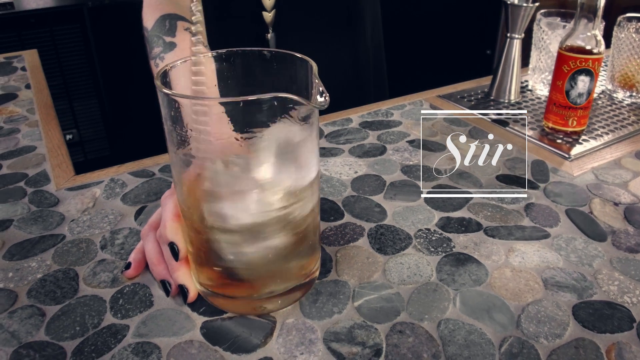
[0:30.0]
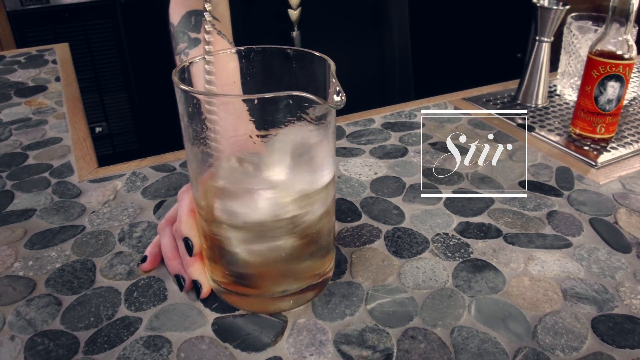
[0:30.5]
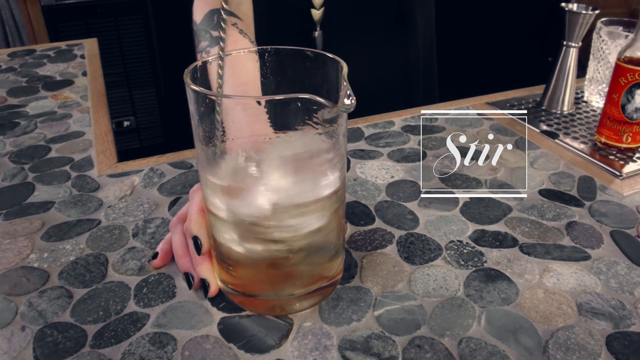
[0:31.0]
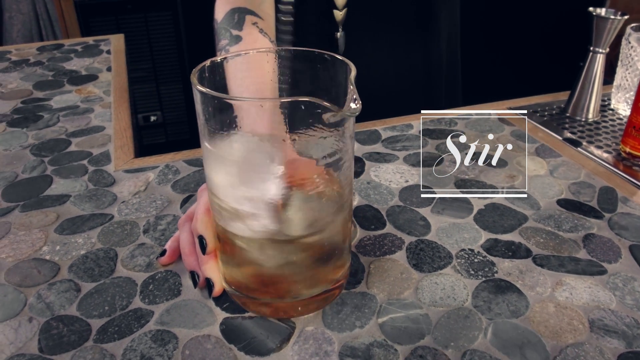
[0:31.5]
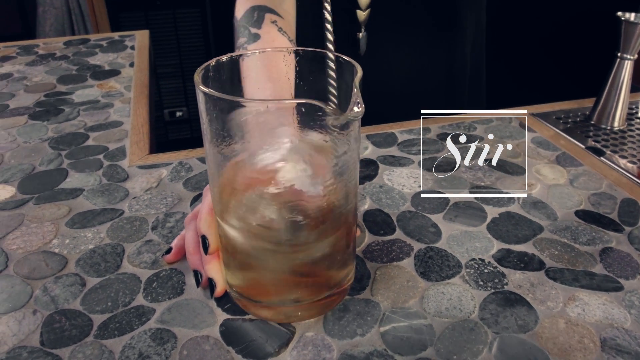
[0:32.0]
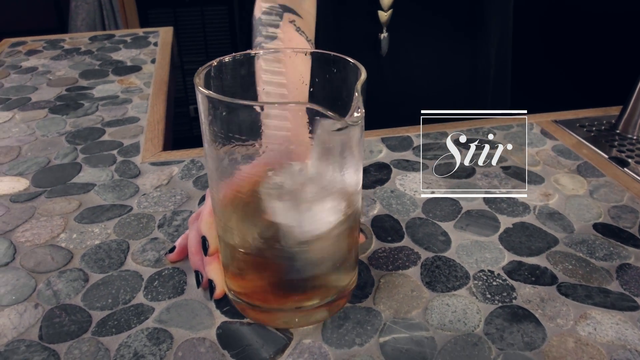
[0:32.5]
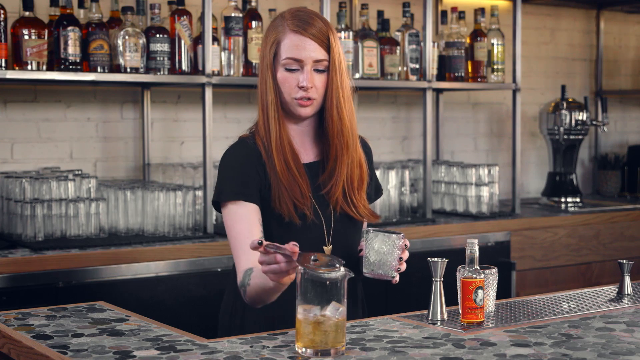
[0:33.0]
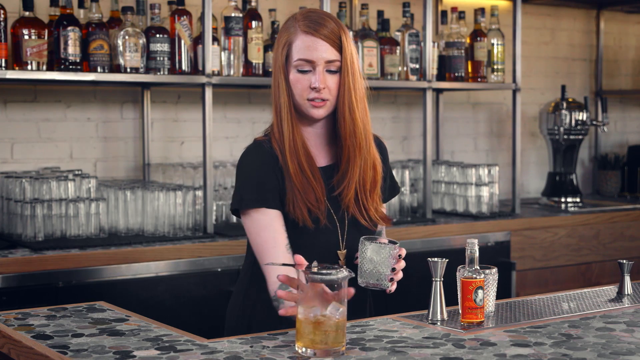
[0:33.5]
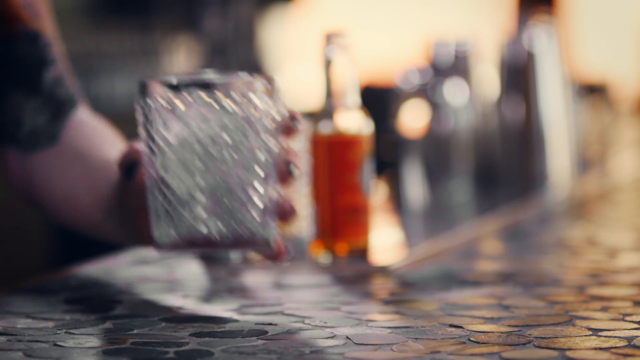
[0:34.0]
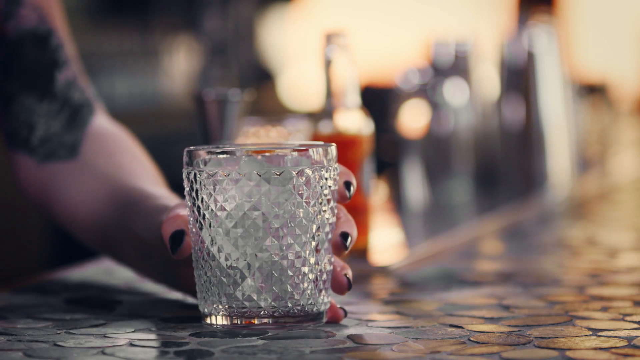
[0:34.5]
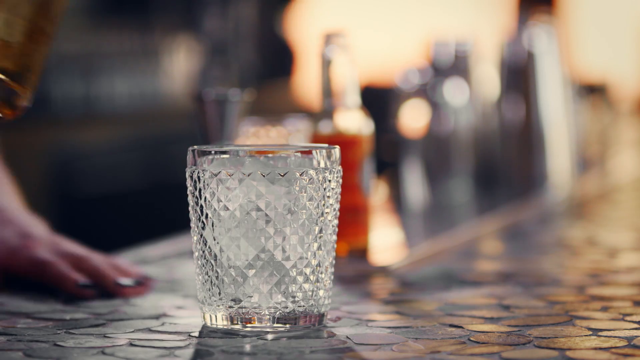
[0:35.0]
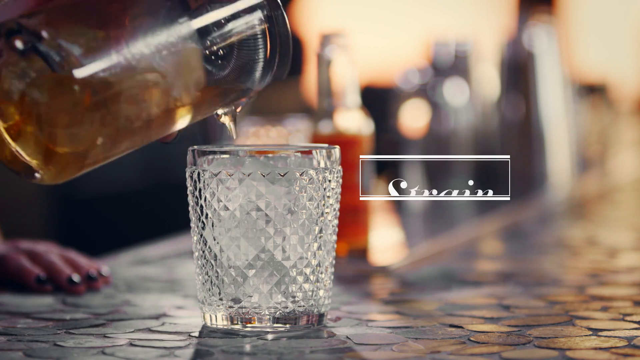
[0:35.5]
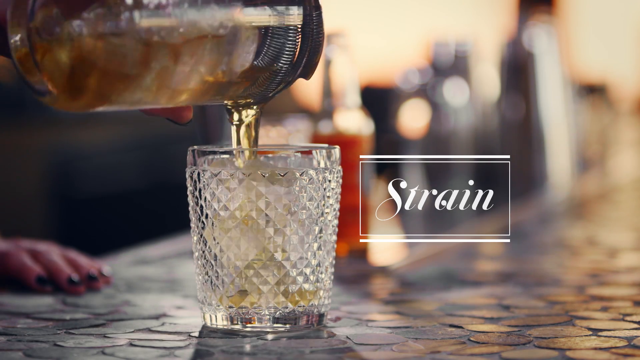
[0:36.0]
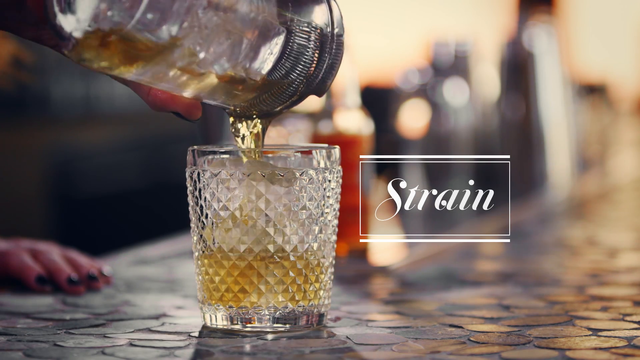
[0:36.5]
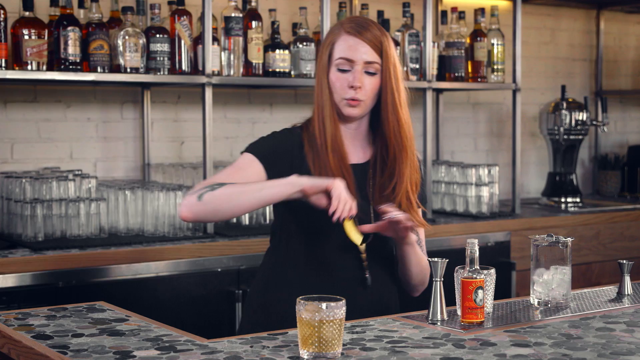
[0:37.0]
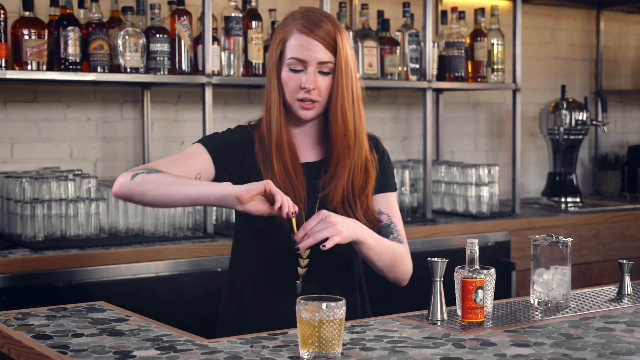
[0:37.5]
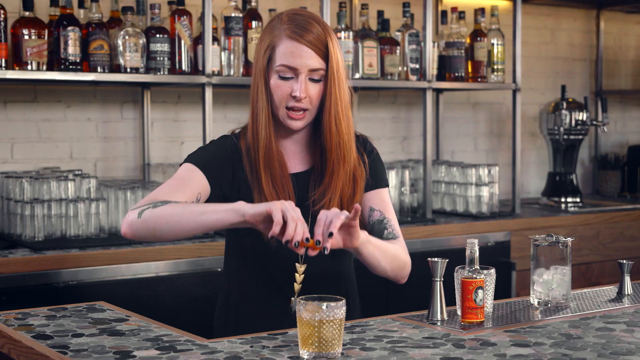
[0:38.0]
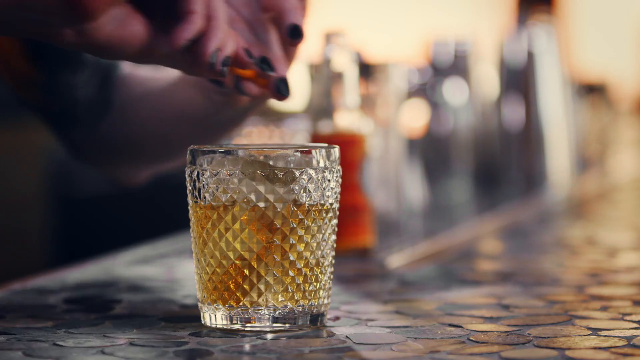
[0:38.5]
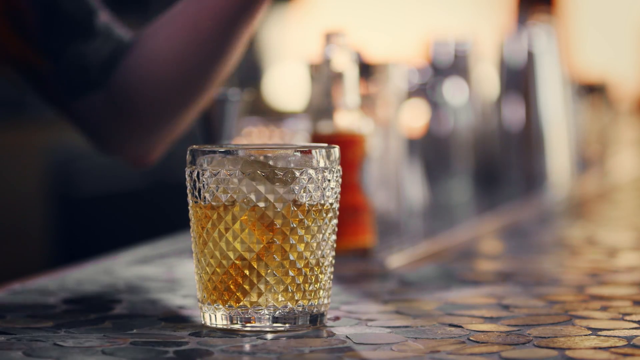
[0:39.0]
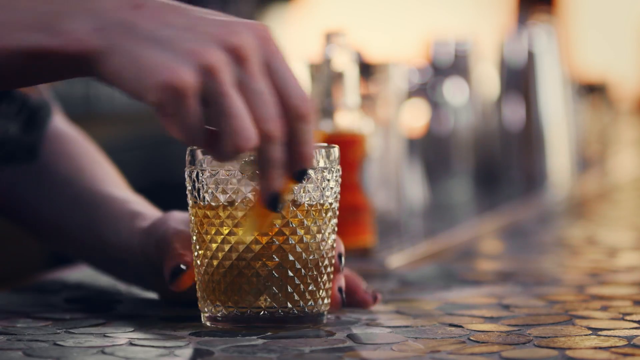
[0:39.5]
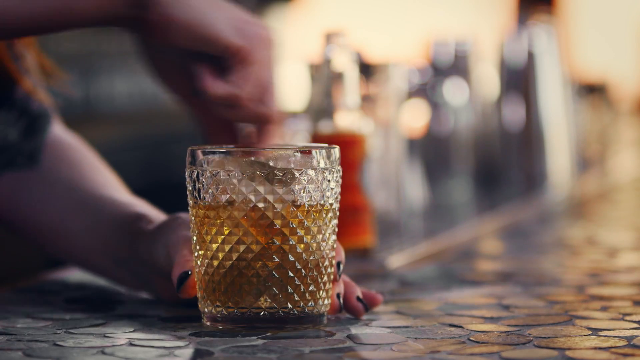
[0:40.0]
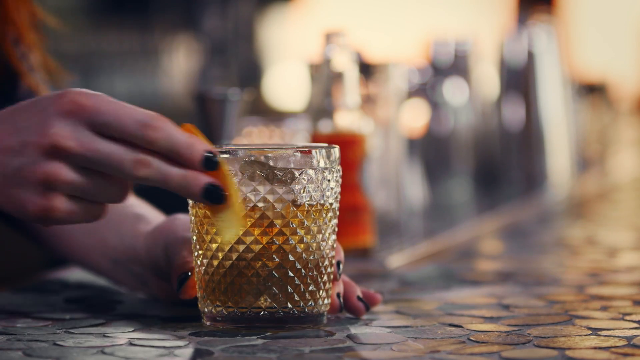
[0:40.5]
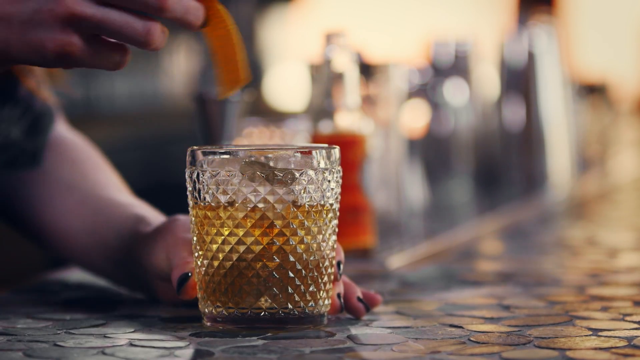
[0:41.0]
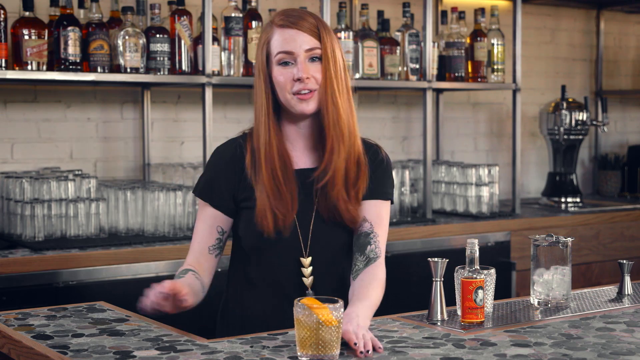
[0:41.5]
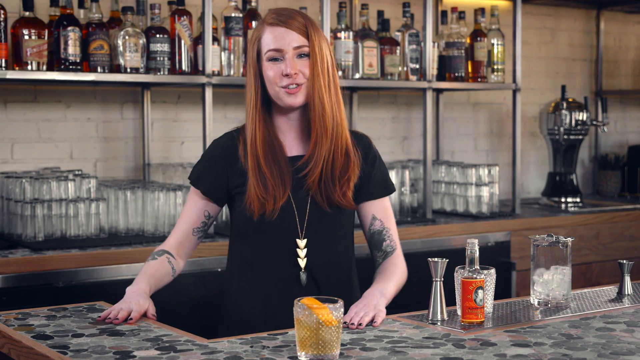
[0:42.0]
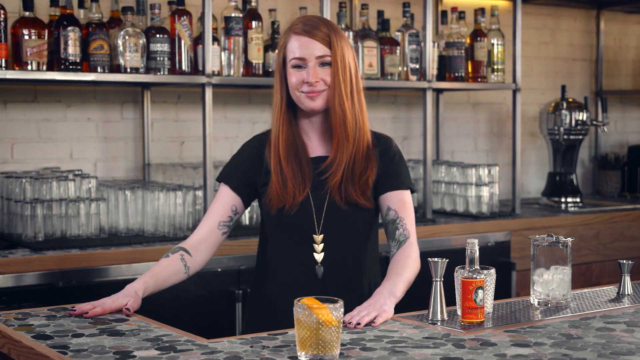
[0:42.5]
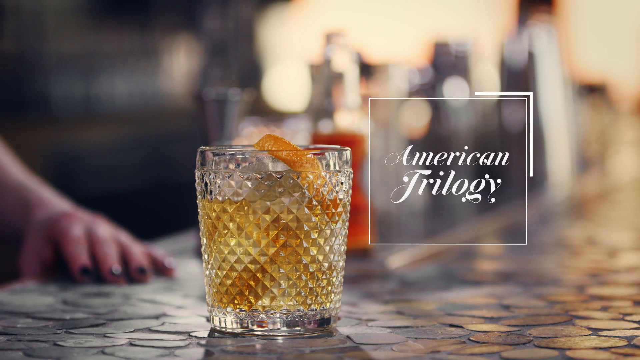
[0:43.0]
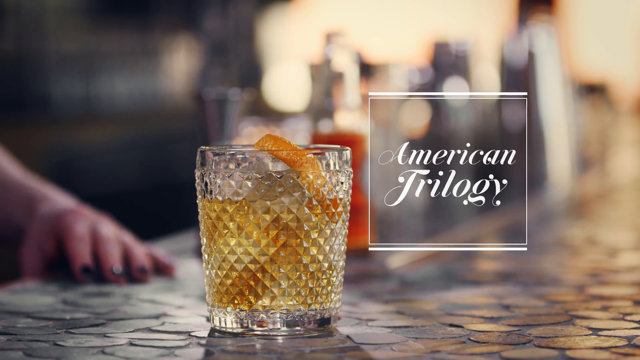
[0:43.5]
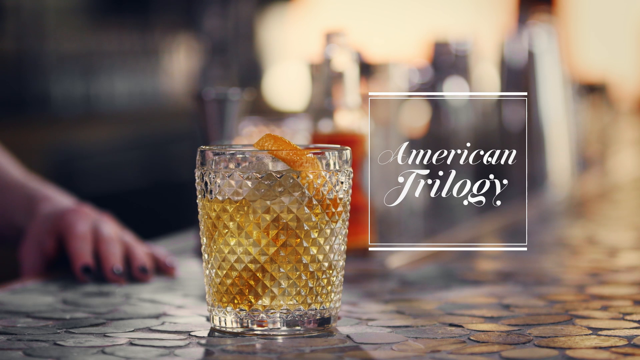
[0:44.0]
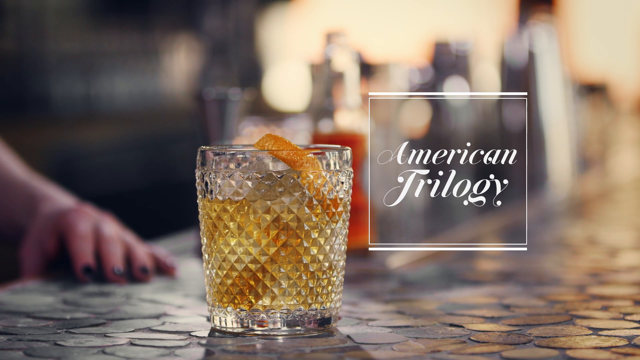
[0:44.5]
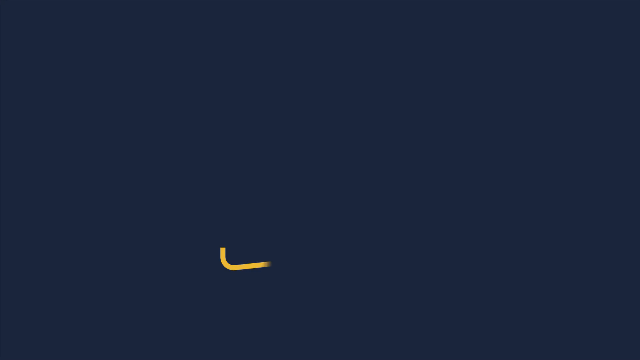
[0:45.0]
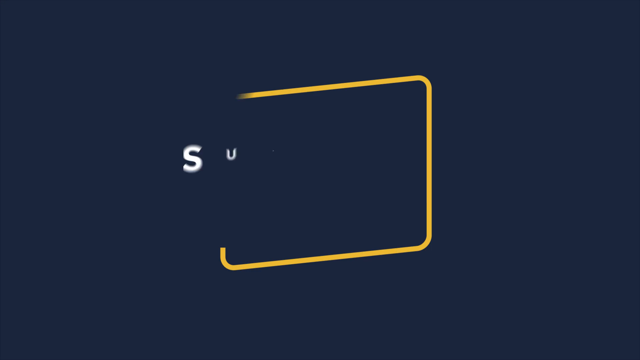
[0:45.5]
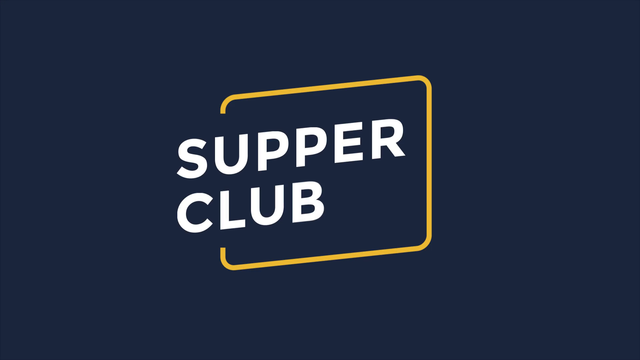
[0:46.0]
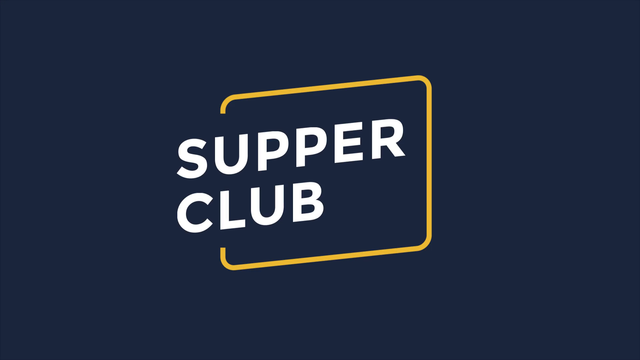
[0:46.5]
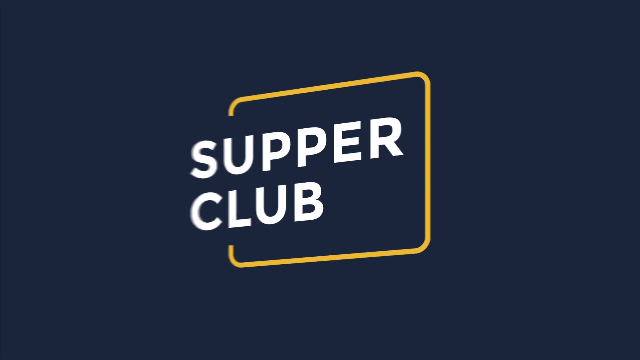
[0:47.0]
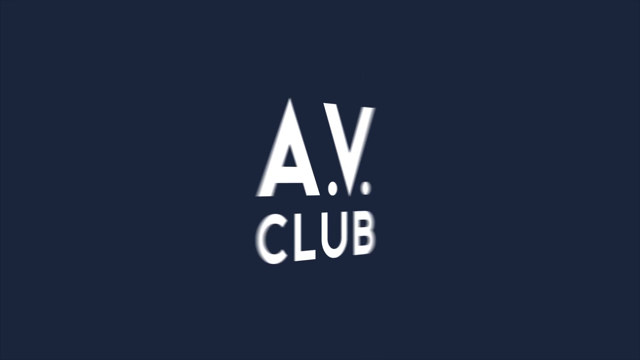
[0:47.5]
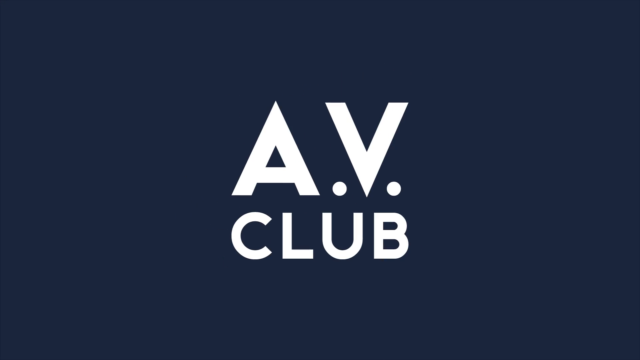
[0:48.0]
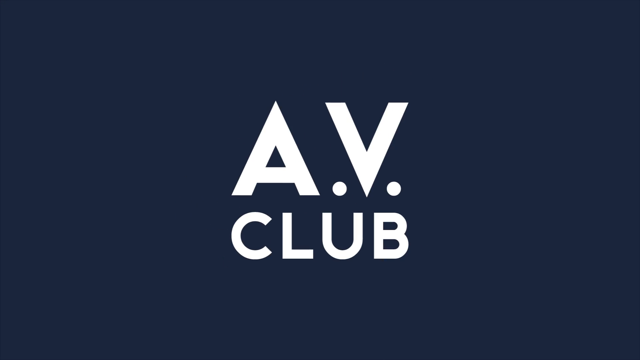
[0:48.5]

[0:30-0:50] The counter looks old-fashioned and appears to be built of stone, looking strong. Text reads "American Trilogy", possibly the name of the cocktail she has just created. She looks confident, as if she is used to doing this. Text reading "Super Club" appears with a yellow wave around the words. After that, at the end, the same words from the beginning of the video, "AV Cocktail Club", appear in stylish white letters on a blue background.